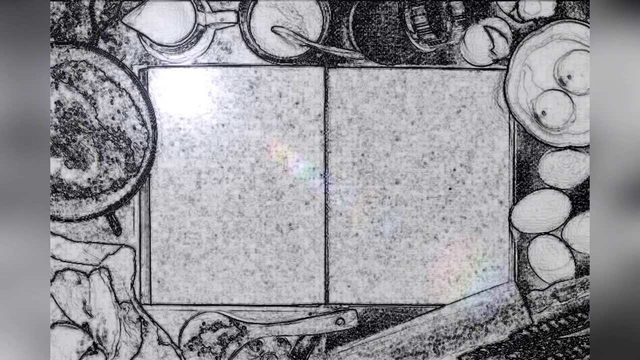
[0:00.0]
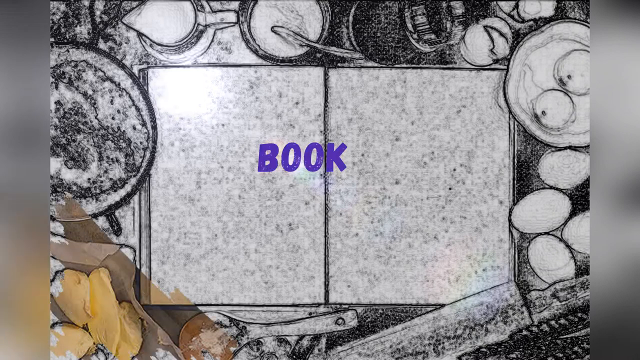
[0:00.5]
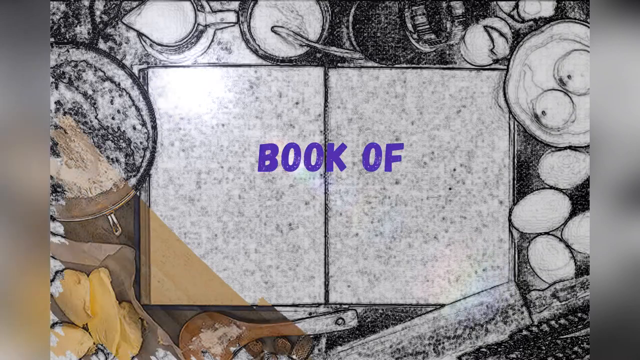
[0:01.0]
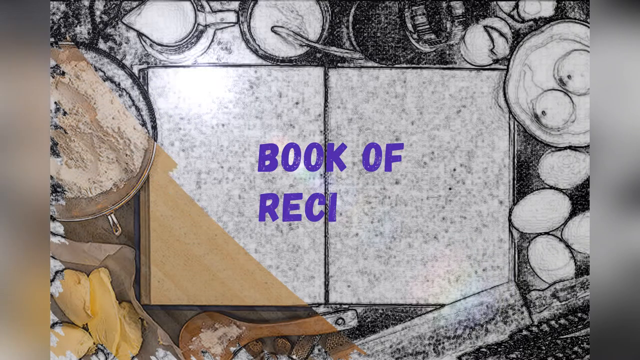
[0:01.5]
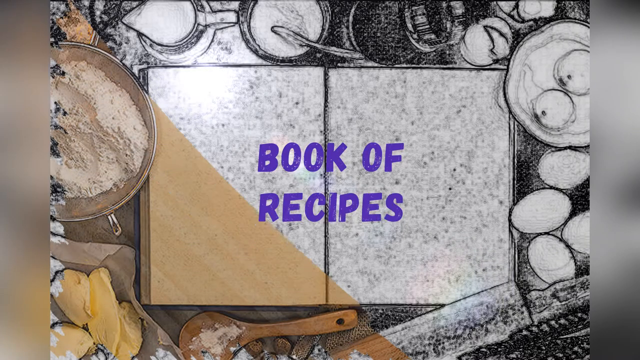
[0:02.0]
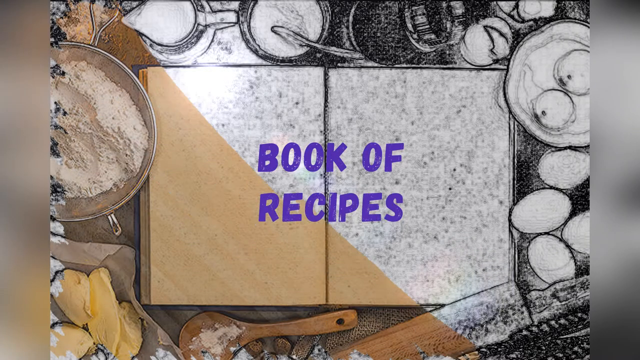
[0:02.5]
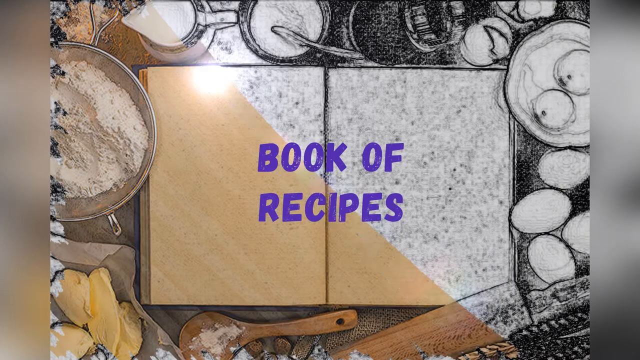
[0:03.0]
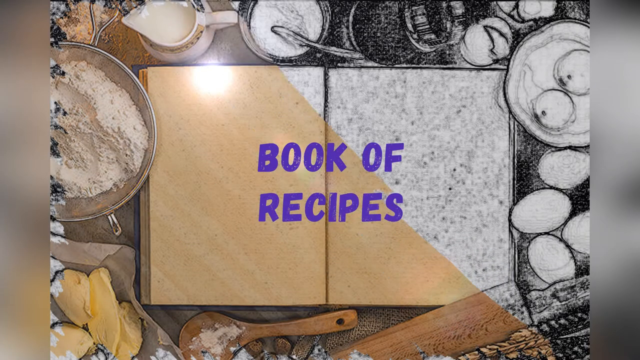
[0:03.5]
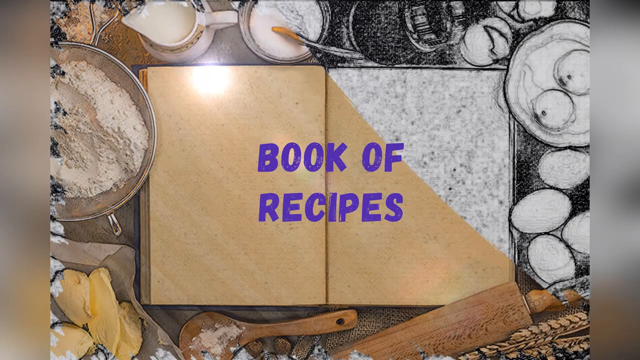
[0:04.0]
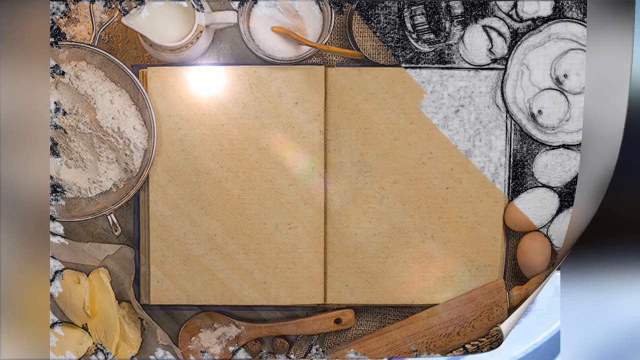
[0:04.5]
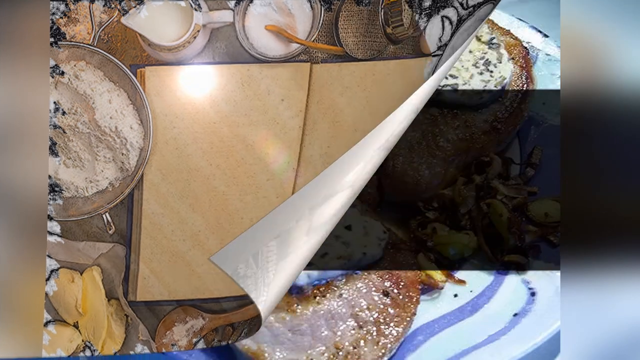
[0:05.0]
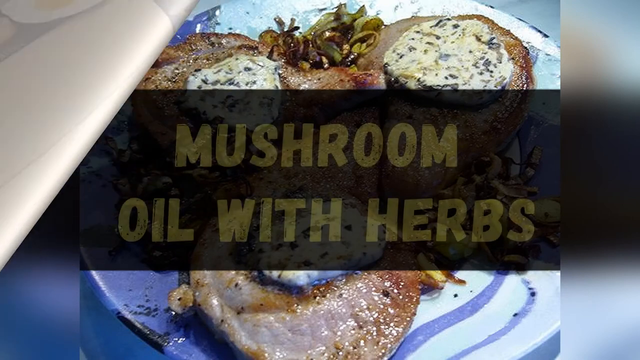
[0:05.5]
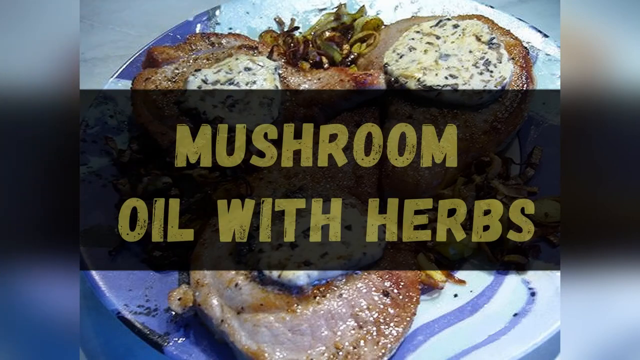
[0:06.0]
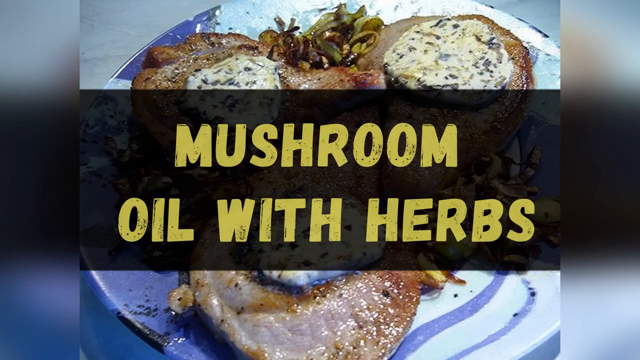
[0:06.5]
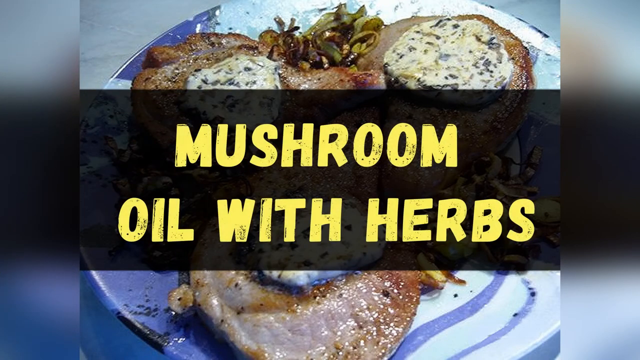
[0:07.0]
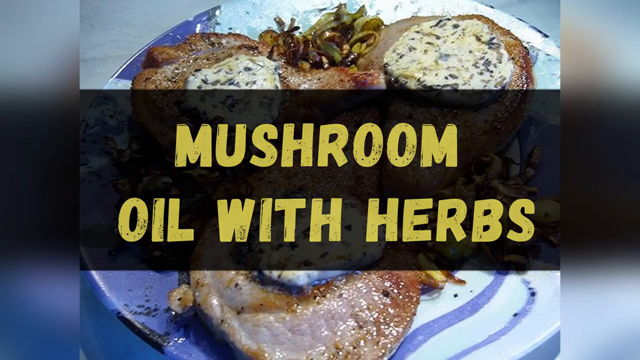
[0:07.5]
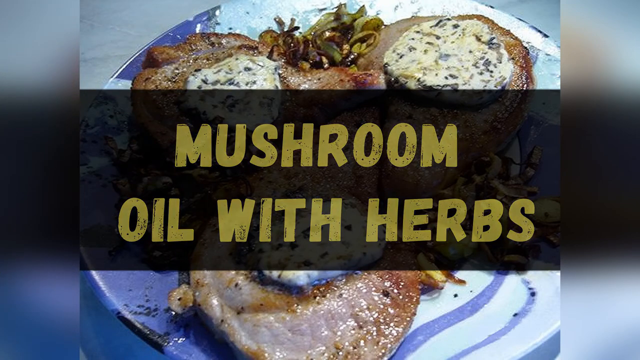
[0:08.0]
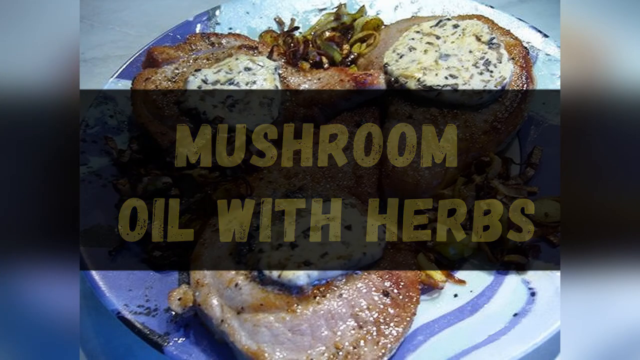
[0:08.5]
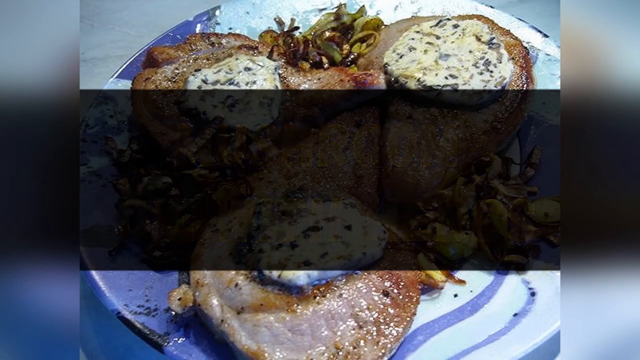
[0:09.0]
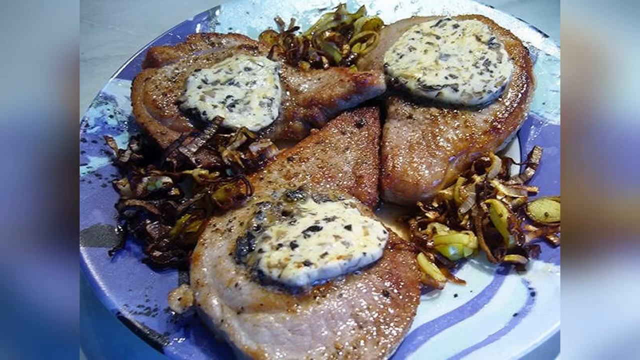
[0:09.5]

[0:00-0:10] The video opens with a graphic that says "Book of Recipes," showing what looks like a cookbook and some food set up. It transitions to a text overlay reading "Mushroom Oil with Herbs" over another bit of food: what looks like some kind of meat, about three or four pieces, with something white, apparently mushroom, on top, plus some other cut-up slices of something, all set on a blue plate. The shot is zoomed in very close, and the food looks very professionally cooked and appealing.